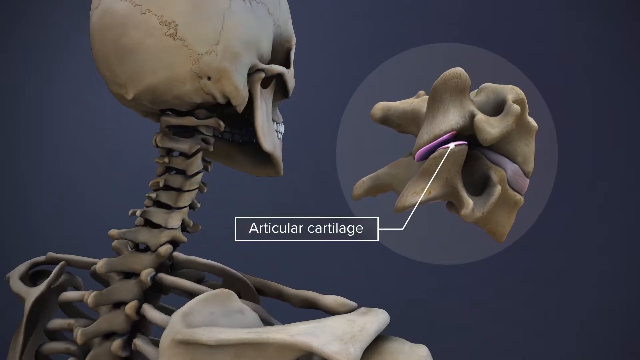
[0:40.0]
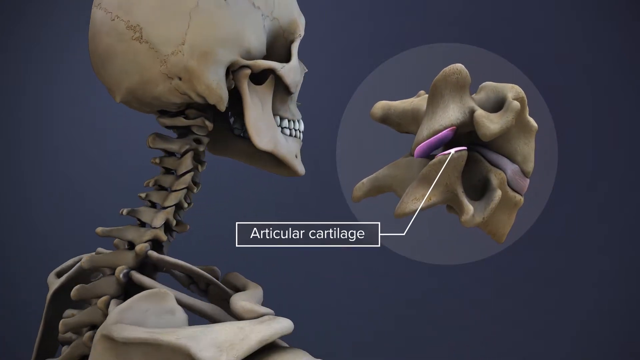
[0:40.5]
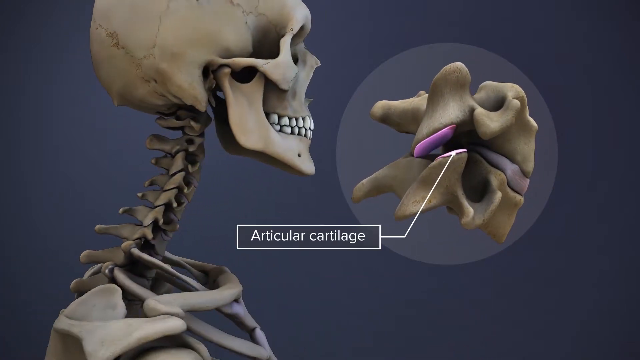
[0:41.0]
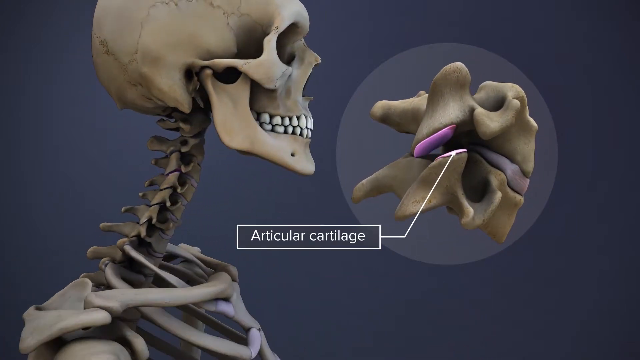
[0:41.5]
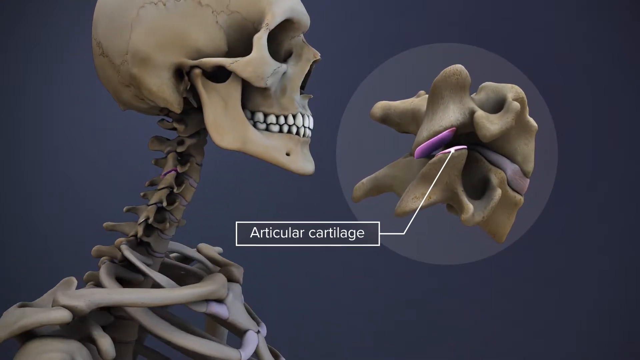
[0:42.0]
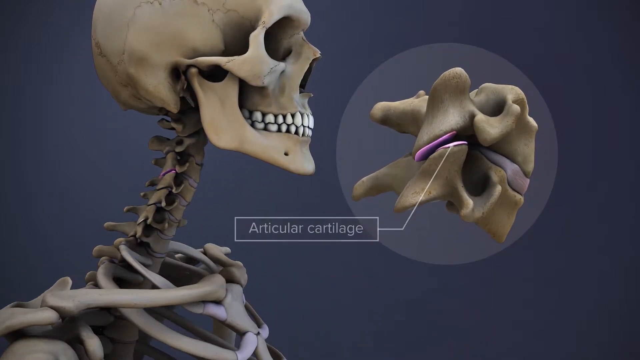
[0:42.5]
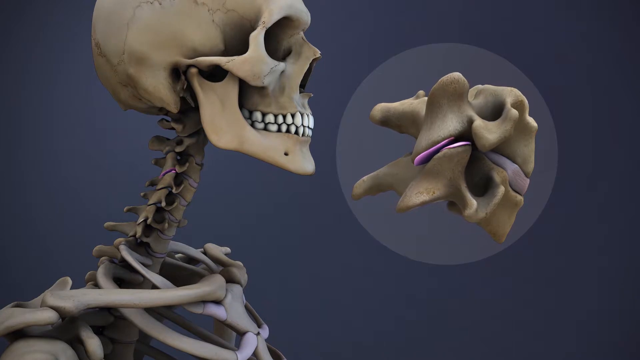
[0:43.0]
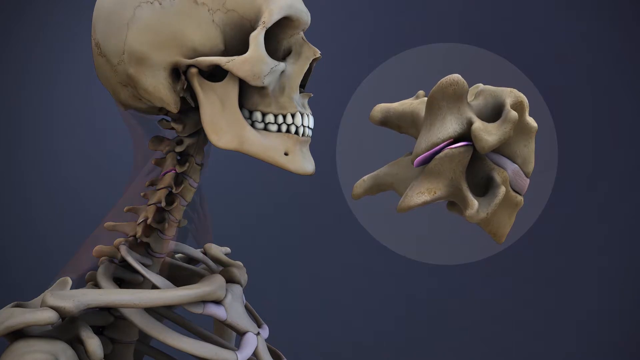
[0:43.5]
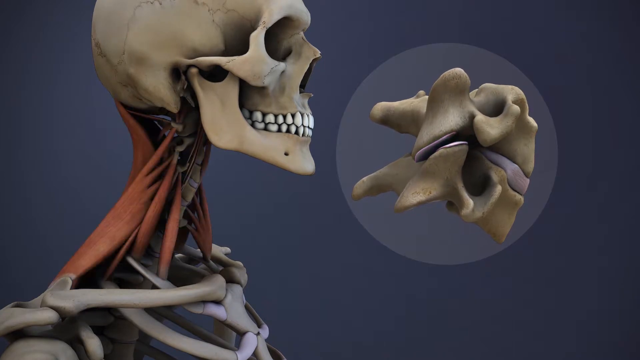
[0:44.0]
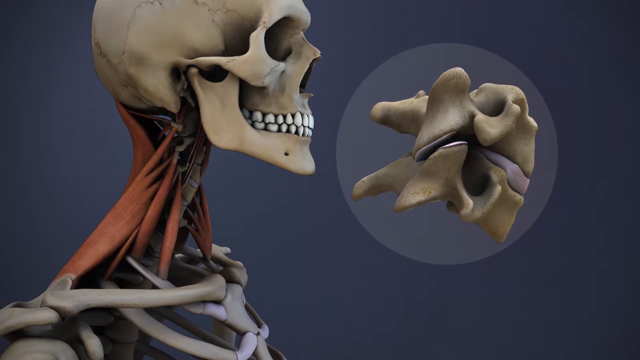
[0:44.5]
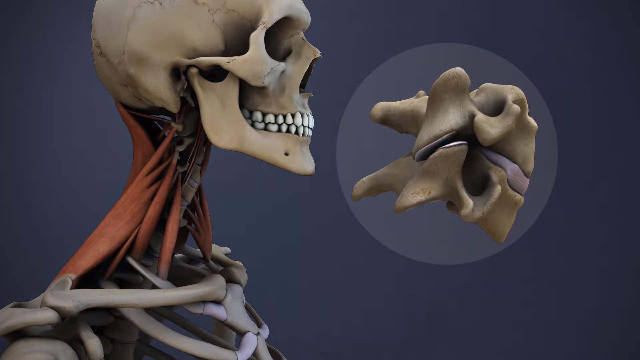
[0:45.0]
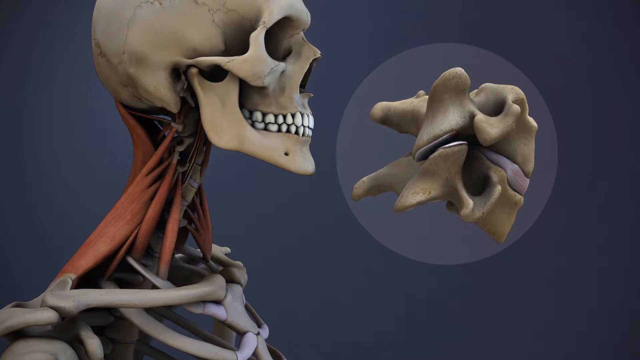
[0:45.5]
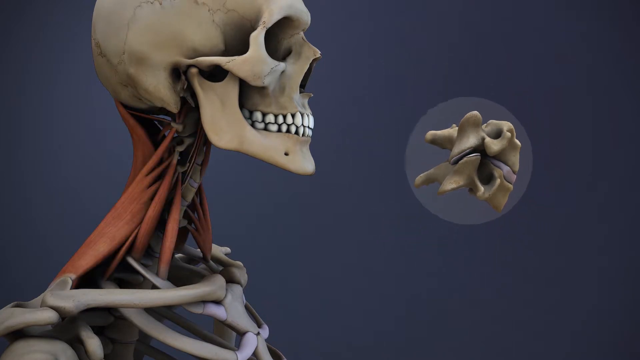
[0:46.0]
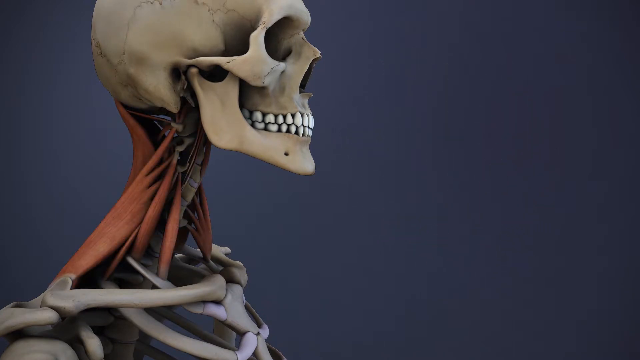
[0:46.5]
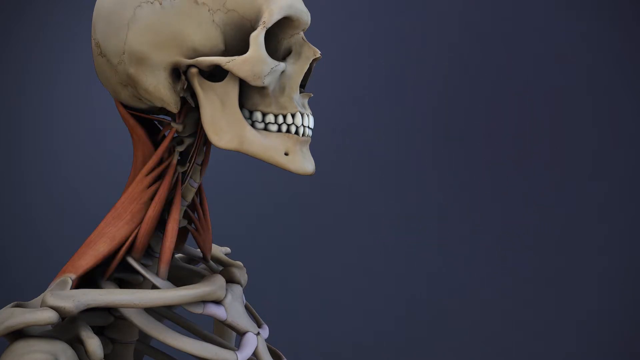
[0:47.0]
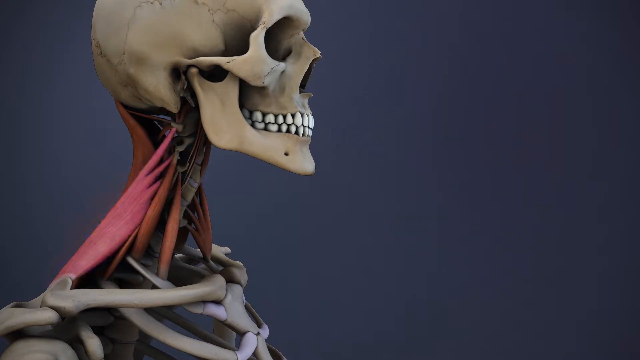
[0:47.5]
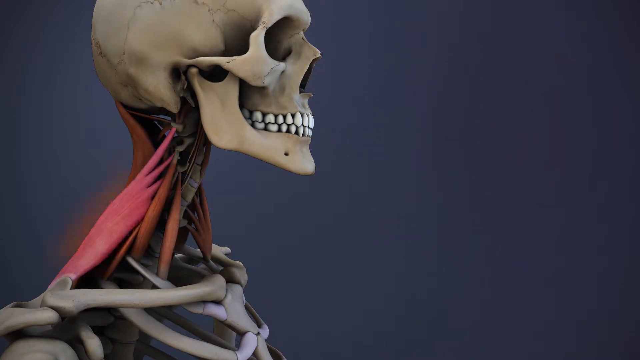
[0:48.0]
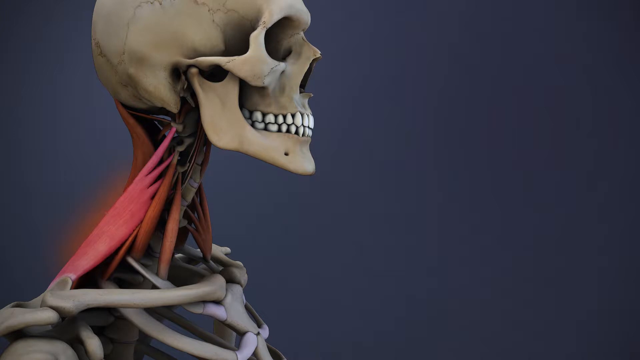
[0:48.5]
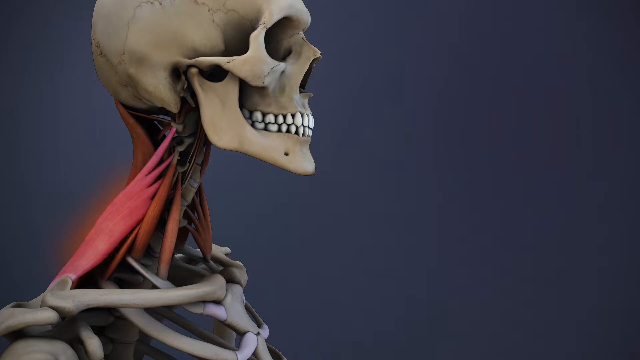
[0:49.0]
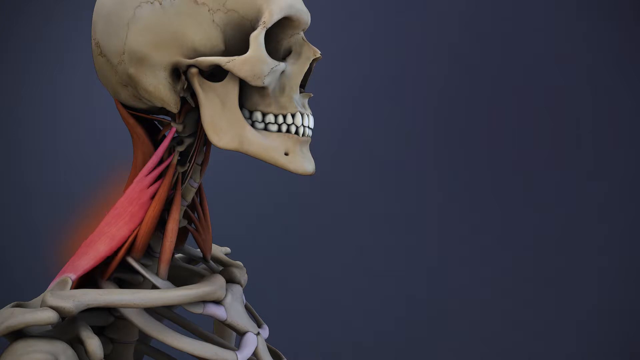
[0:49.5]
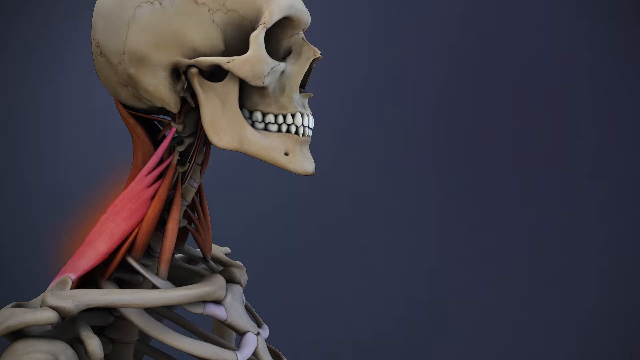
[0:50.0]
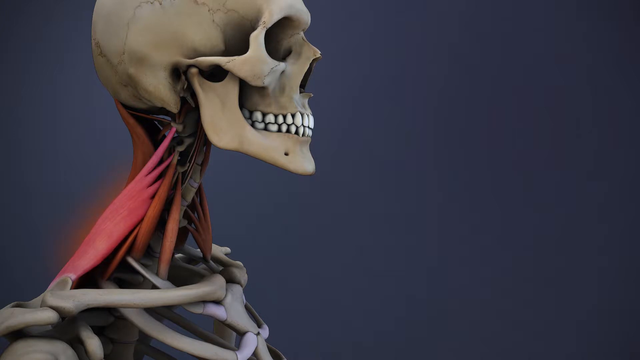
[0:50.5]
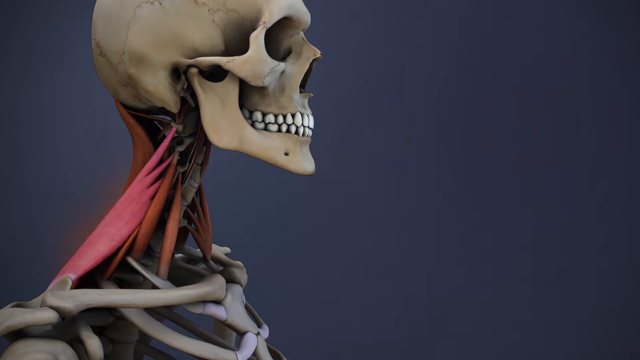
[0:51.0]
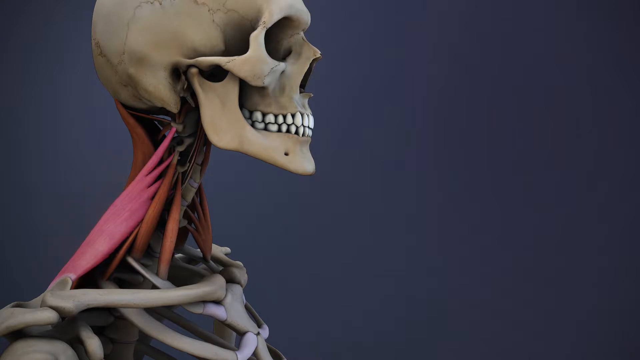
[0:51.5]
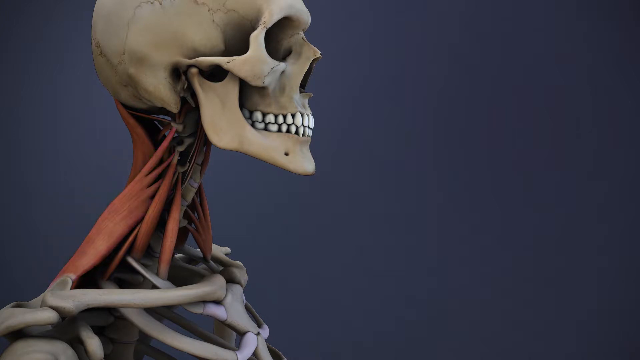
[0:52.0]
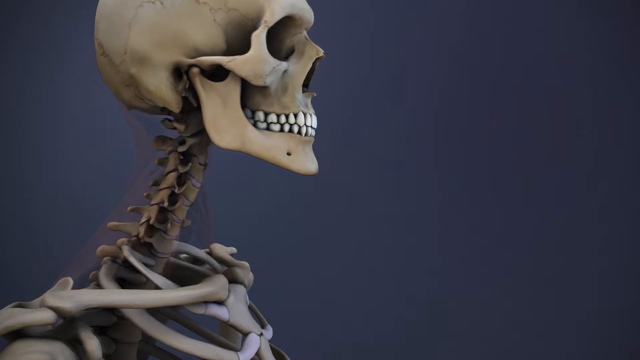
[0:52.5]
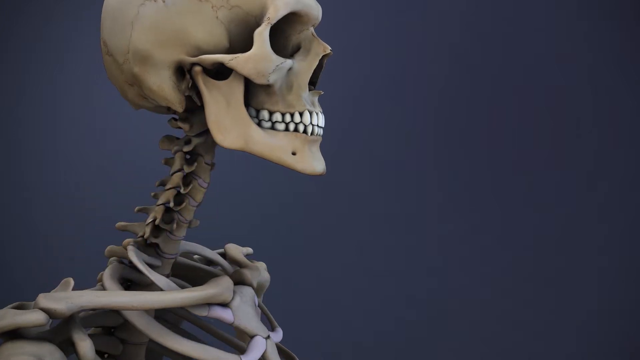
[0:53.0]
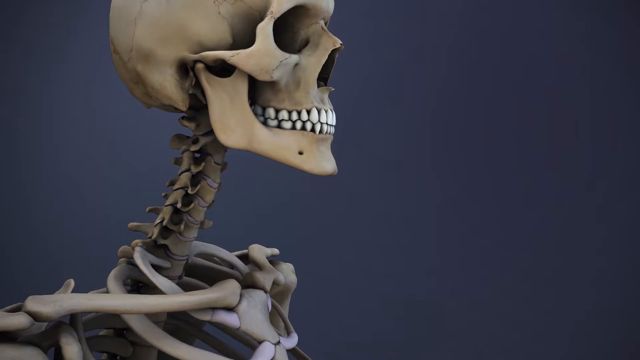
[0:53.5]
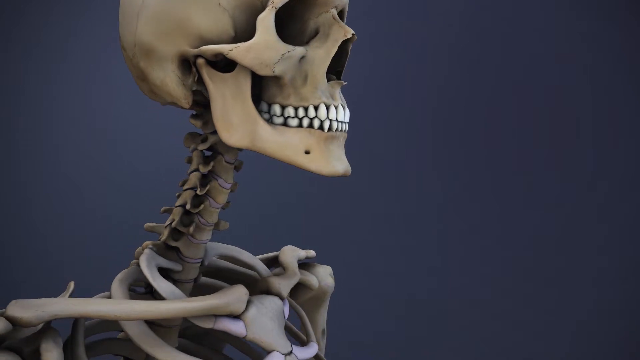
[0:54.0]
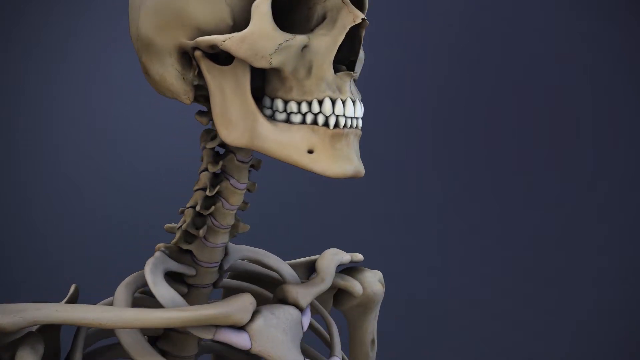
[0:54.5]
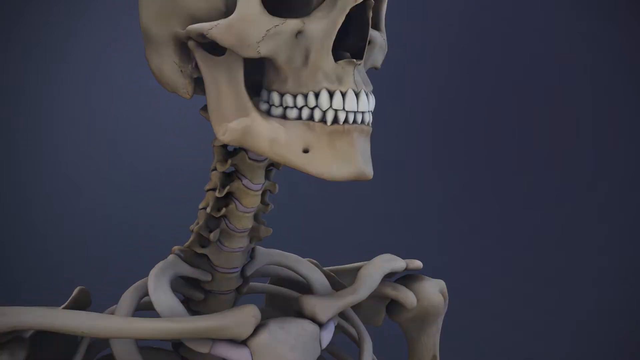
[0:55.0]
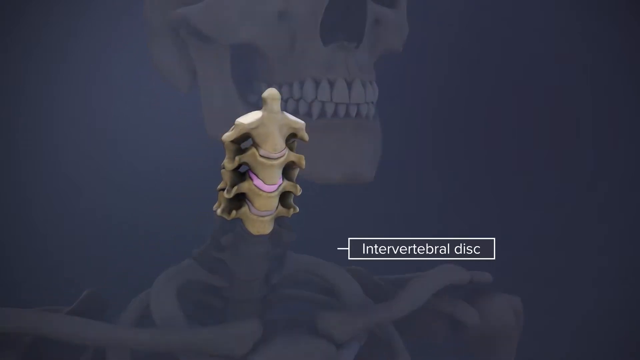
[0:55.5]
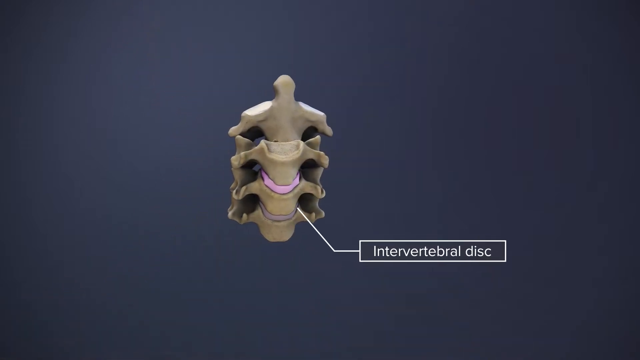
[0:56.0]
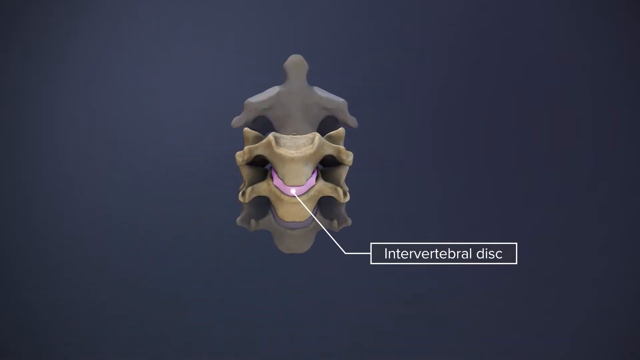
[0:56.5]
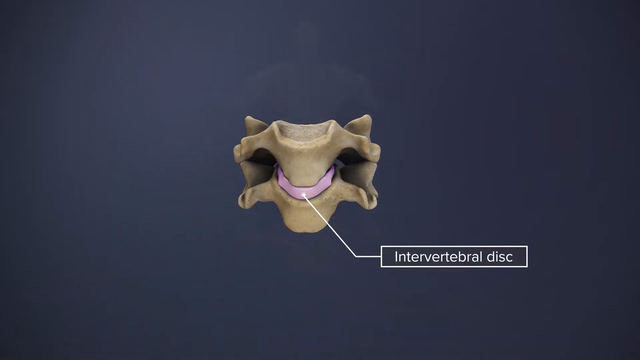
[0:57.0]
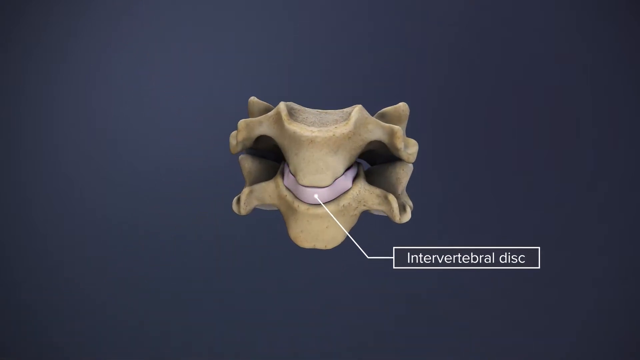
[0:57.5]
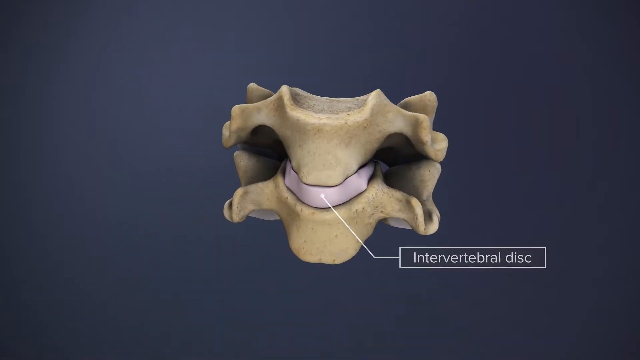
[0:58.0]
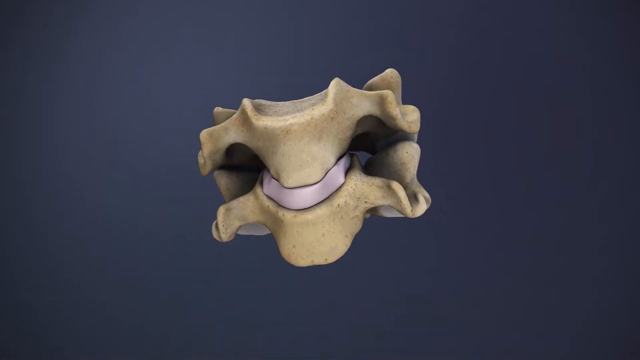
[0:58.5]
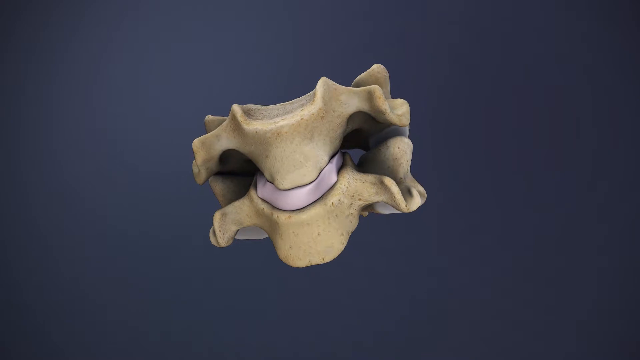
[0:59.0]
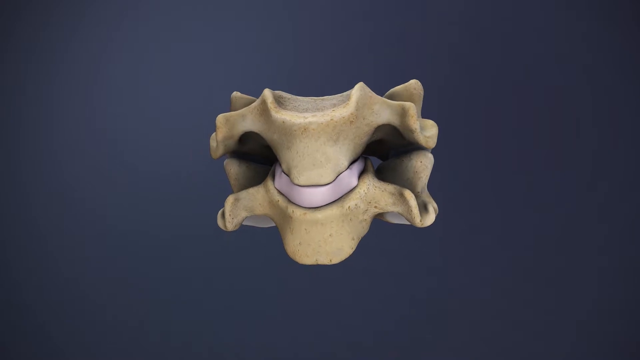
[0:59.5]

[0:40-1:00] The skeleton's body continues to rotate until its right side is visible, with the zoomed-in picture still on the right. The words there have changed to "Articular Cartilage". The skeleton keeps rotating and then stops. The zoomed-in area on the right starts shifting as if closing, then disappears. Light red, almost pink muscle tendons appear on the right side of the skeleton's neck and move up and down as if contracting. The skeleton rotates again to show its front face, and then the view of the skeleton fades out. A small section of the neck appears with a label reading "Intervertebral Disc" pointing to the center. A zoomed-in view shows it as a small piece between two vertebrae.